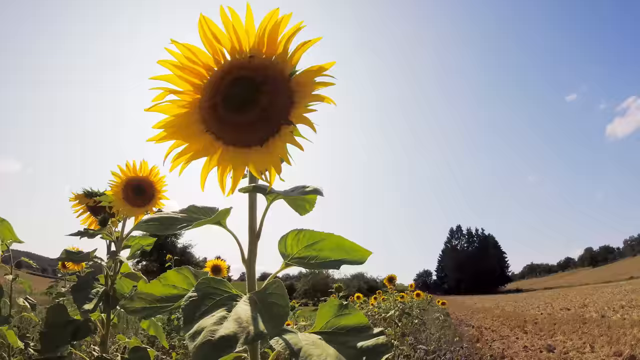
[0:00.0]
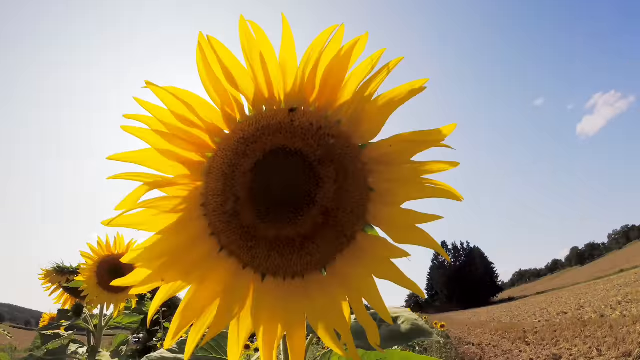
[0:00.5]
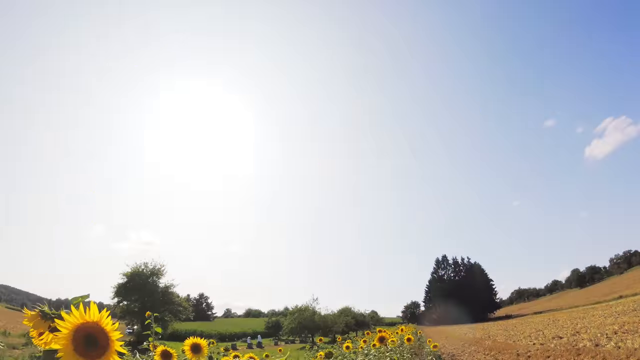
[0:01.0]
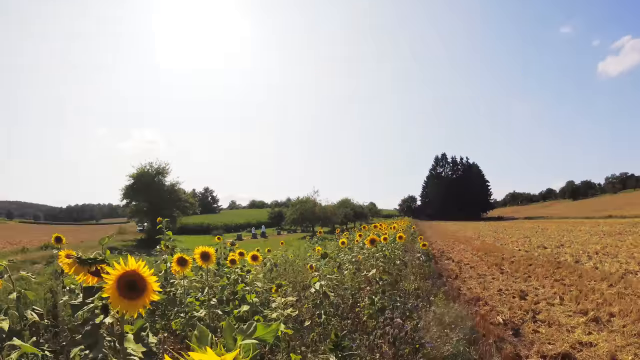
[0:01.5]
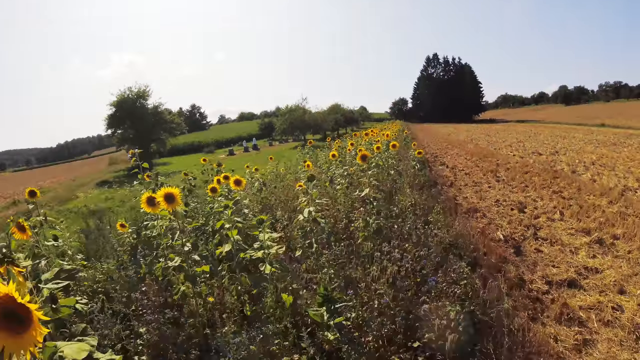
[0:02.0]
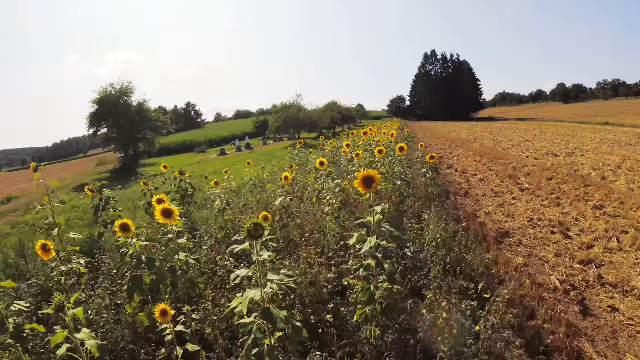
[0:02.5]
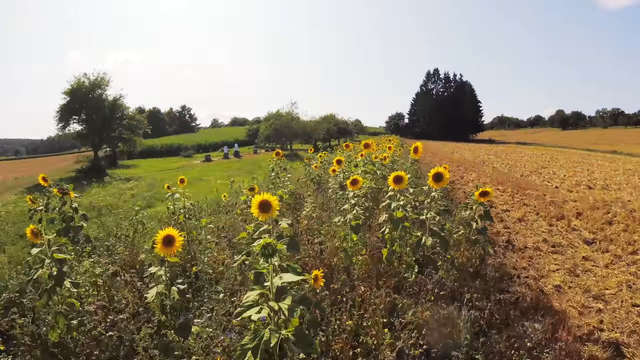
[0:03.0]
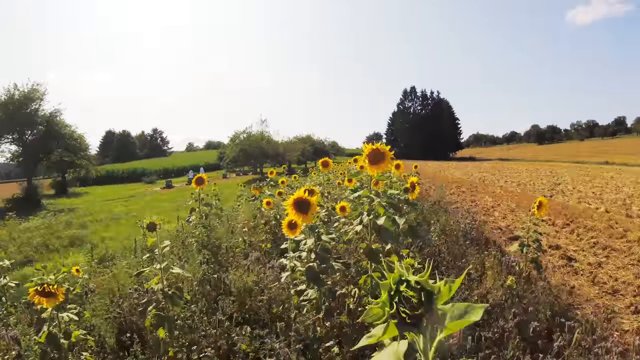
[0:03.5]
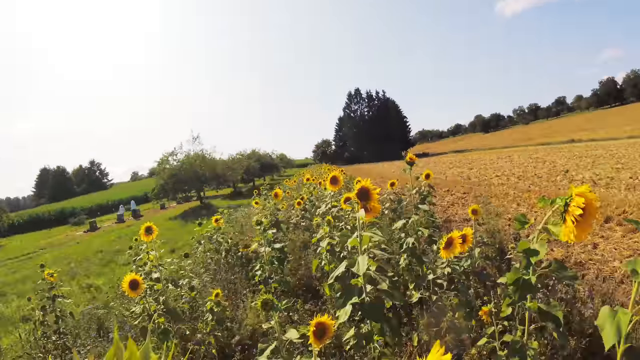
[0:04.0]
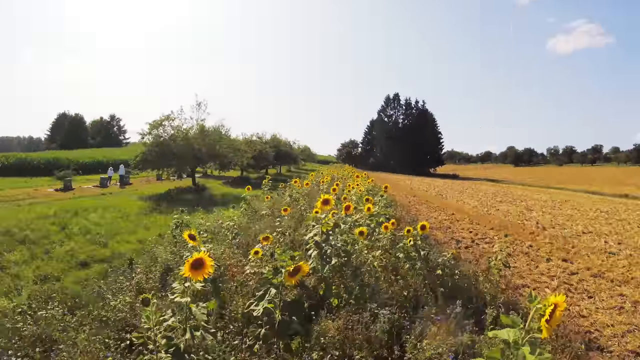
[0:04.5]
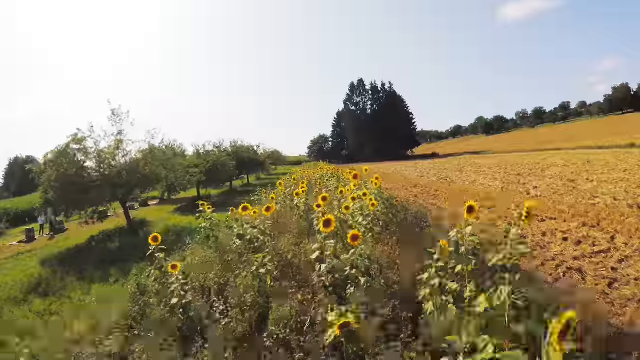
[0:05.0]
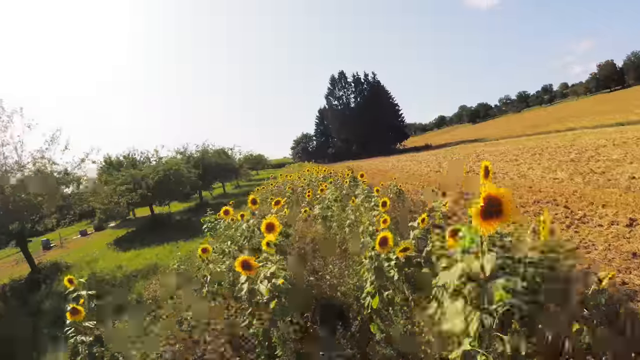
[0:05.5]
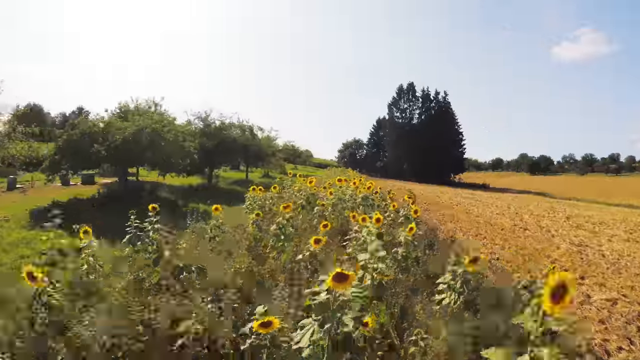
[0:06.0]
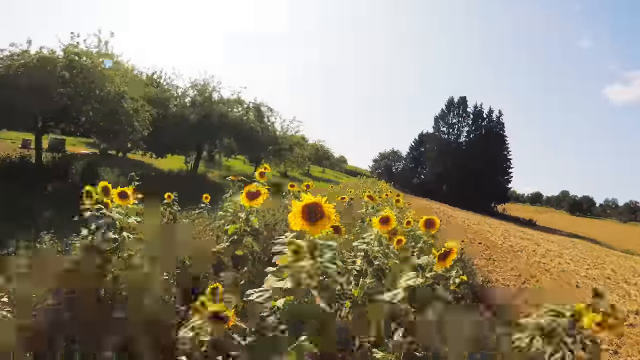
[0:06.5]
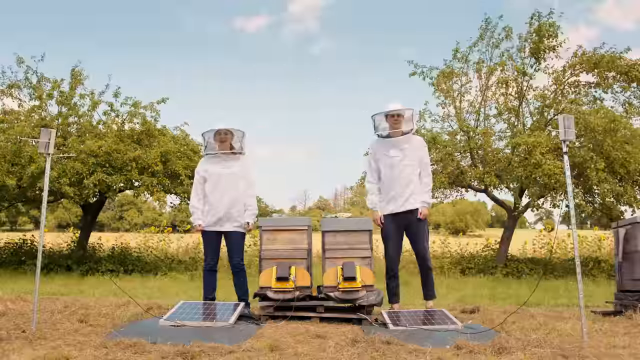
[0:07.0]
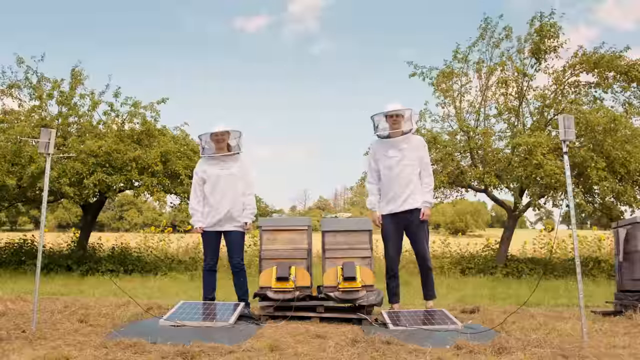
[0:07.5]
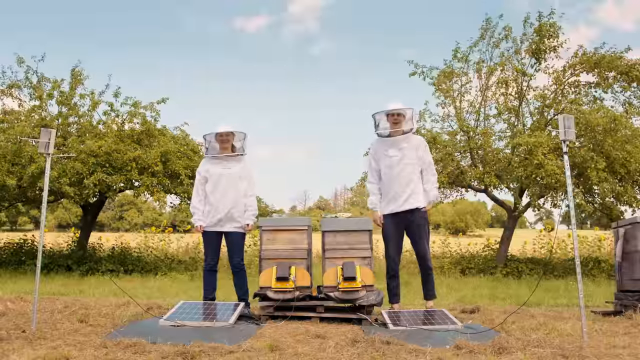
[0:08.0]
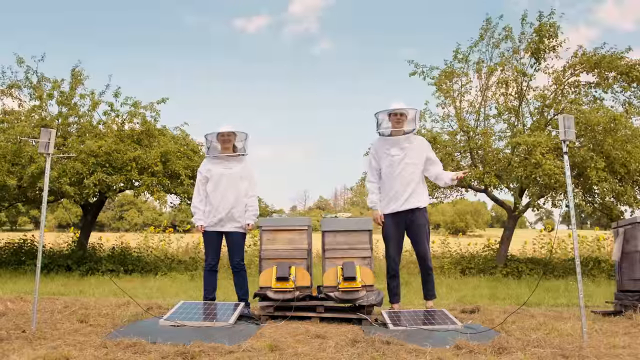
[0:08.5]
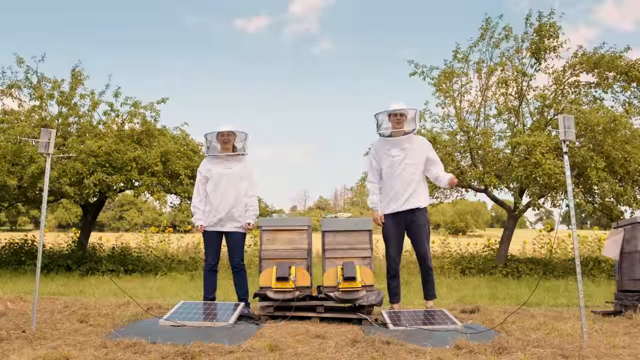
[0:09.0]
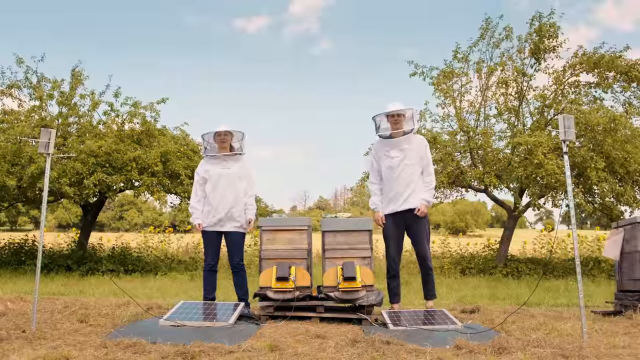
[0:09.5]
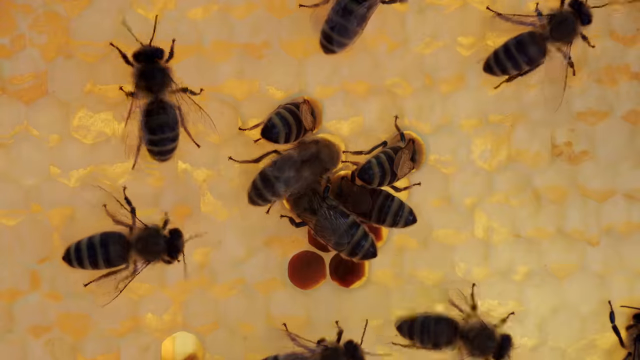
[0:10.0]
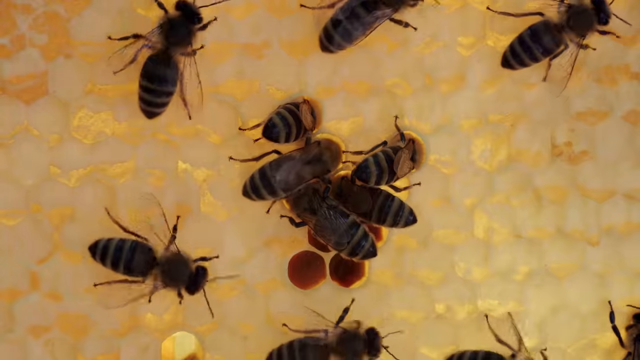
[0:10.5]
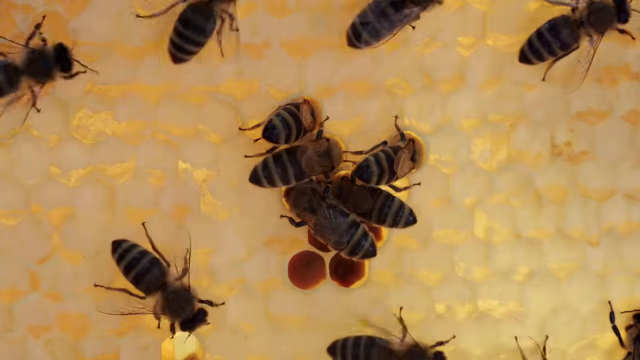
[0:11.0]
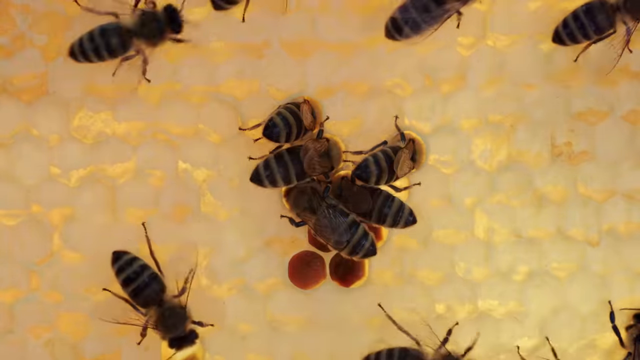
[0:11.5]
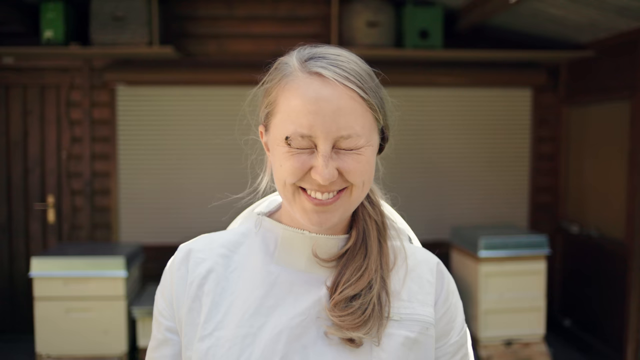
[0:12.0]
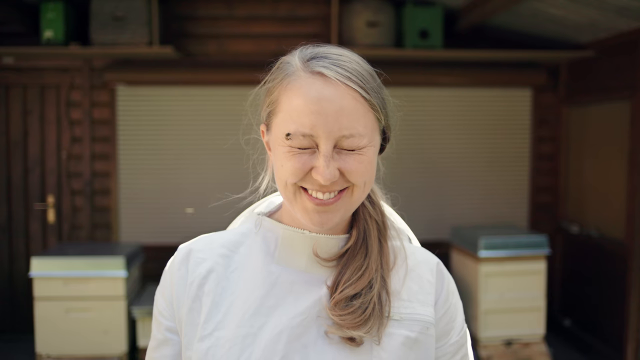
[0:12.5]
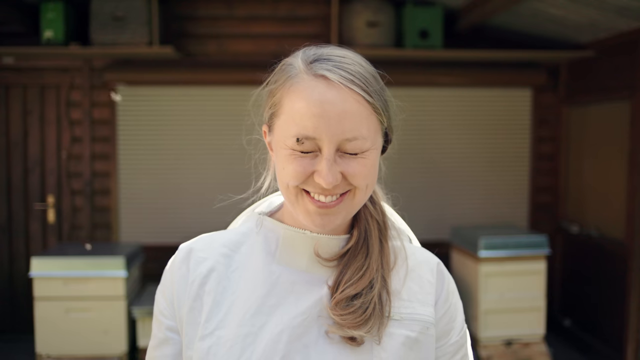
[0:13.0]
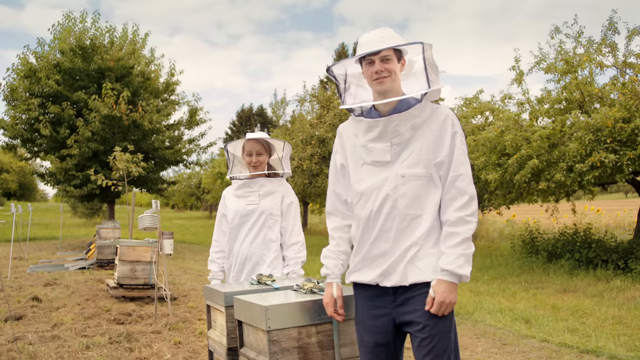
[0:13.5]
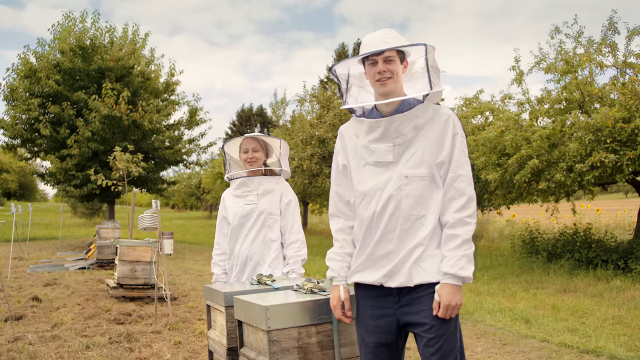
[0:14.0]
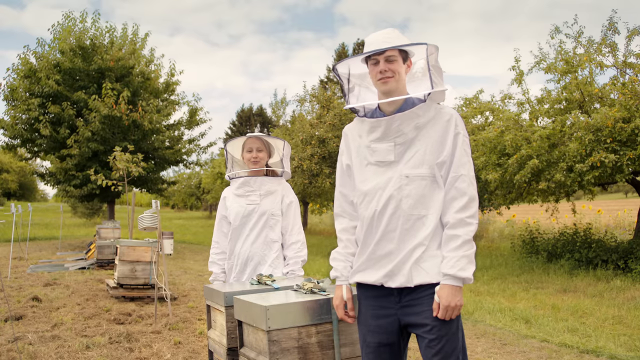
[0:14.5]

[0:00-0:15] A few sunflowers stand in a large outdoor field under shining sun with minimal clouds overhead. The camera goes down a lane of sunflowers, potentially hundreds of them, before panning to two individuals wearing protective gear against the bees: a woman on the left and a man on the right. They seem to be in positive spirits, and there are two solar panels on the ground in front of them. The camera then shows some honeybees, including bees landing on the woman's face.